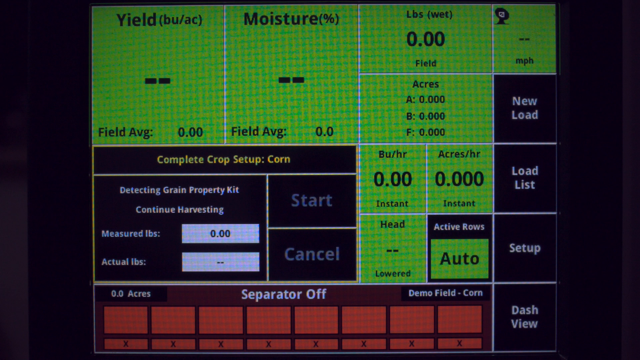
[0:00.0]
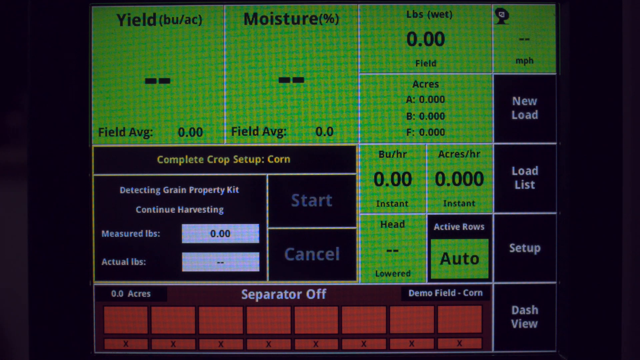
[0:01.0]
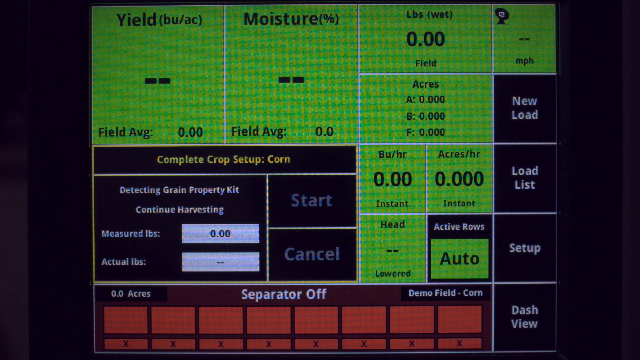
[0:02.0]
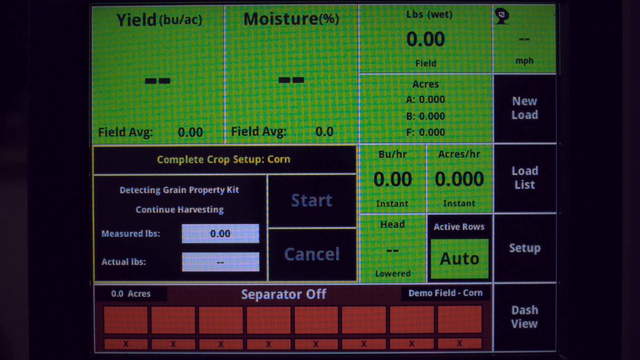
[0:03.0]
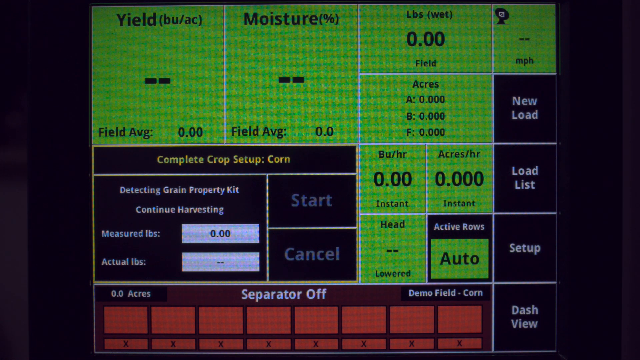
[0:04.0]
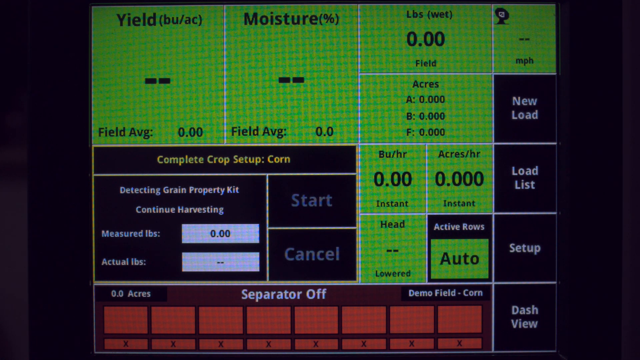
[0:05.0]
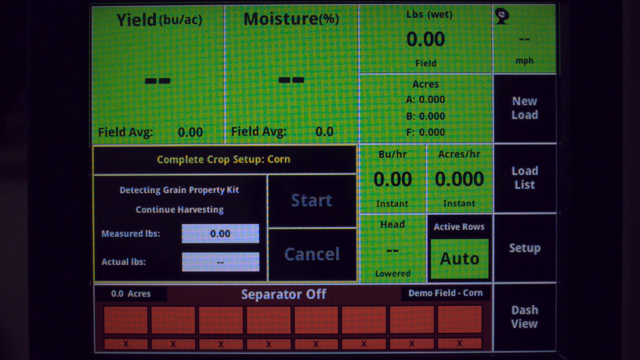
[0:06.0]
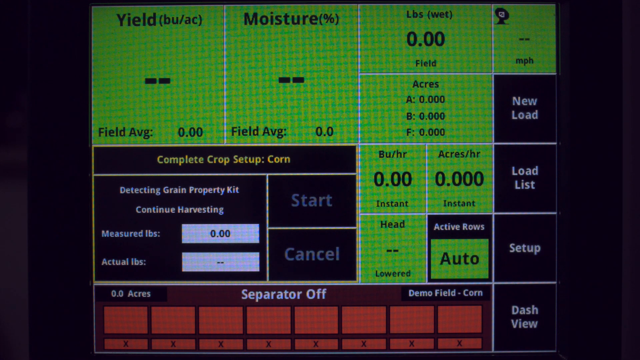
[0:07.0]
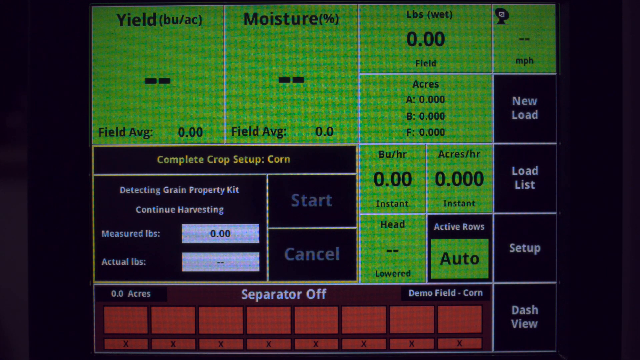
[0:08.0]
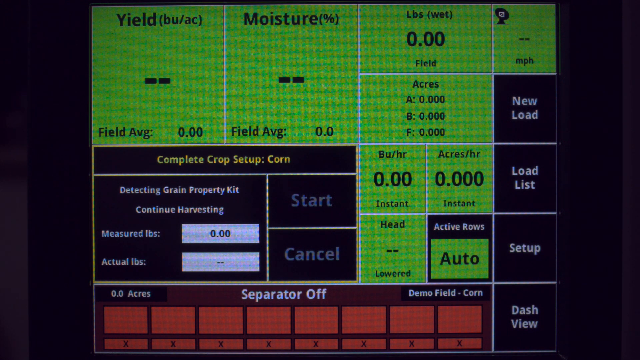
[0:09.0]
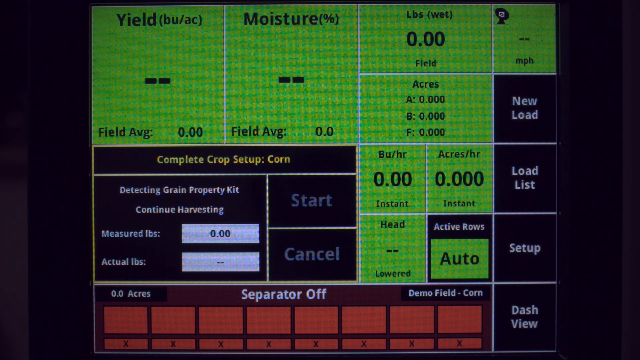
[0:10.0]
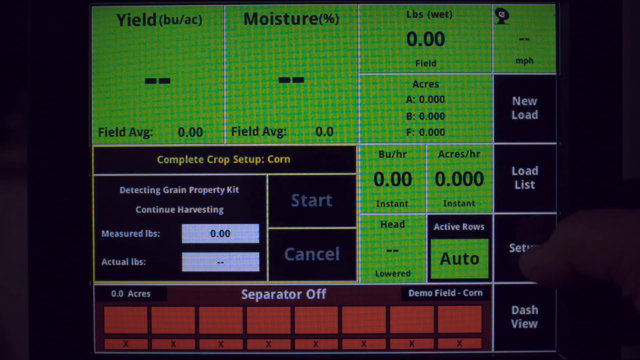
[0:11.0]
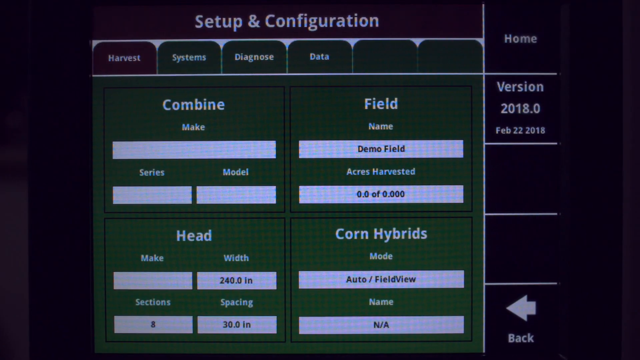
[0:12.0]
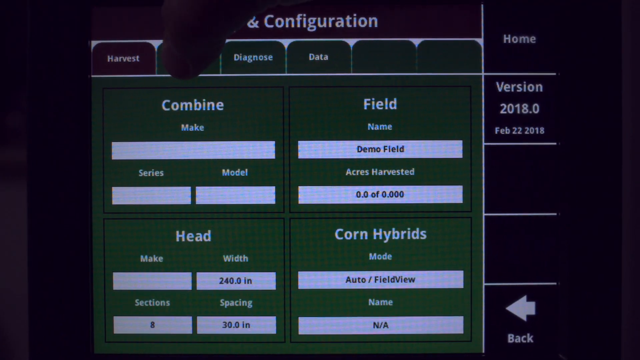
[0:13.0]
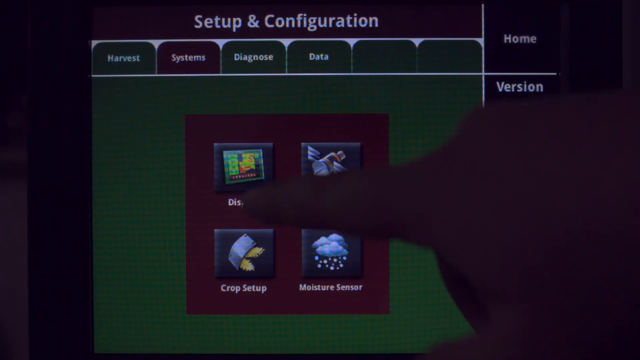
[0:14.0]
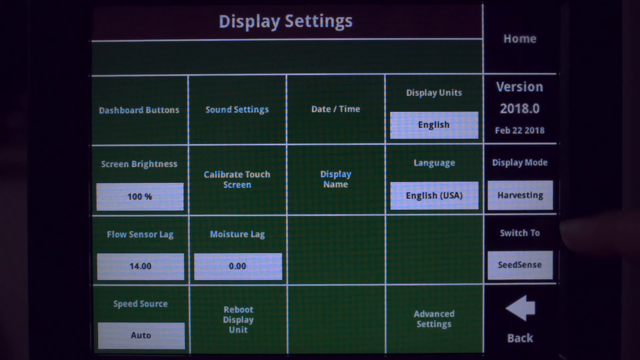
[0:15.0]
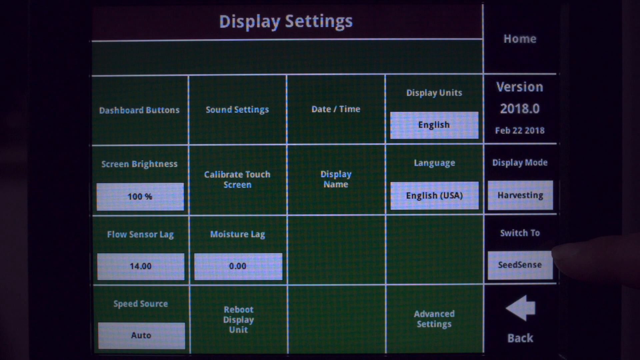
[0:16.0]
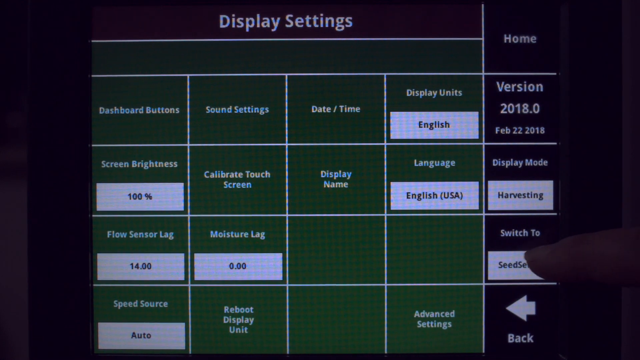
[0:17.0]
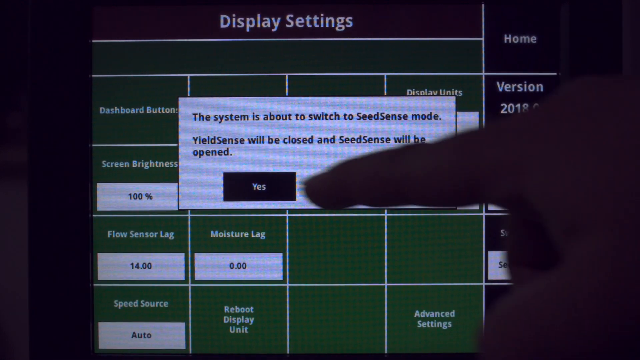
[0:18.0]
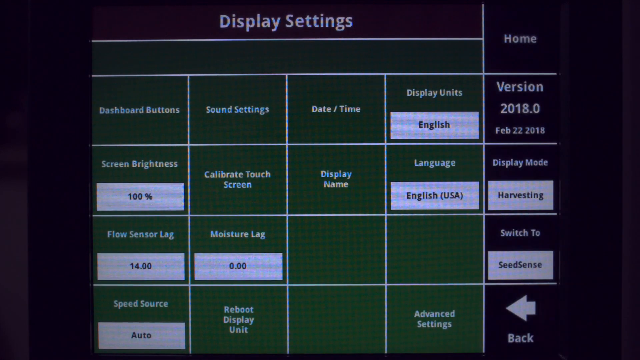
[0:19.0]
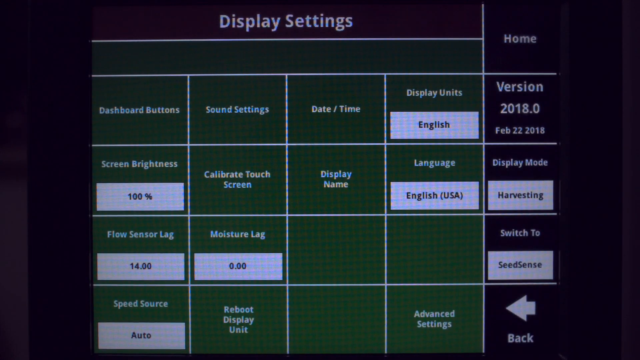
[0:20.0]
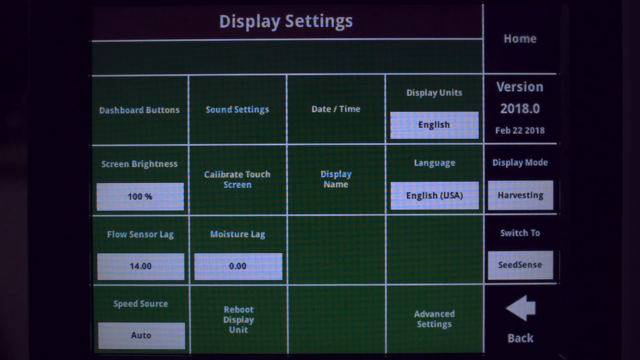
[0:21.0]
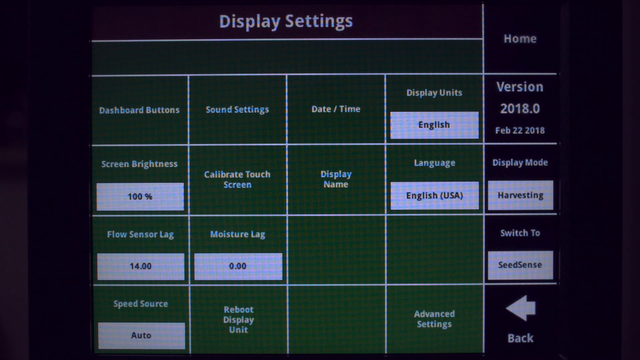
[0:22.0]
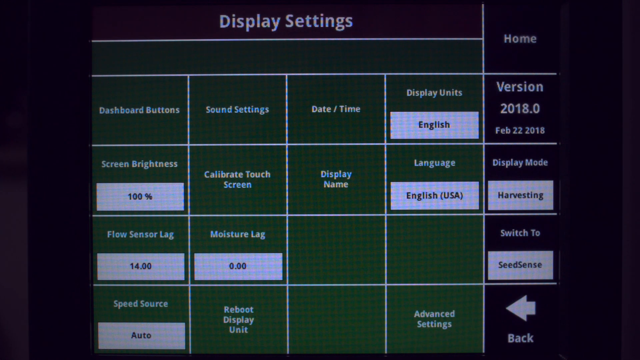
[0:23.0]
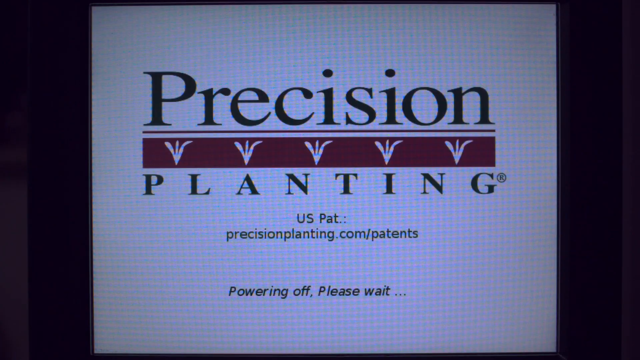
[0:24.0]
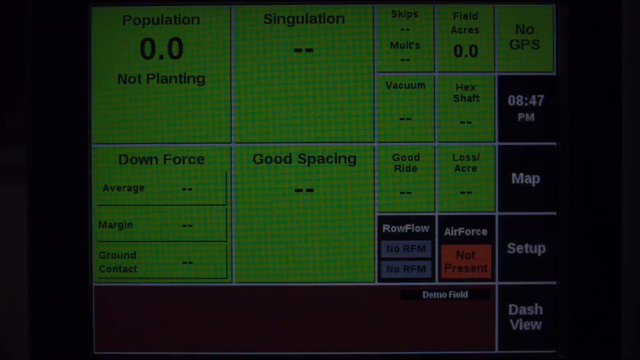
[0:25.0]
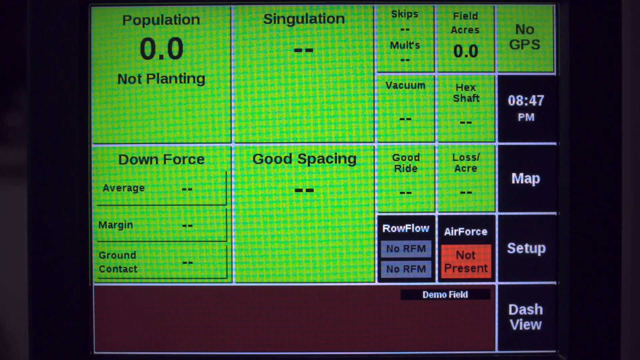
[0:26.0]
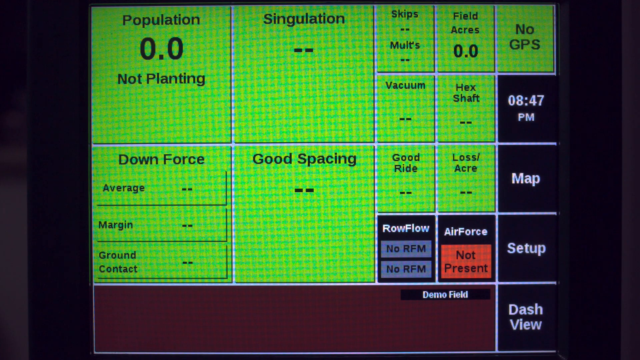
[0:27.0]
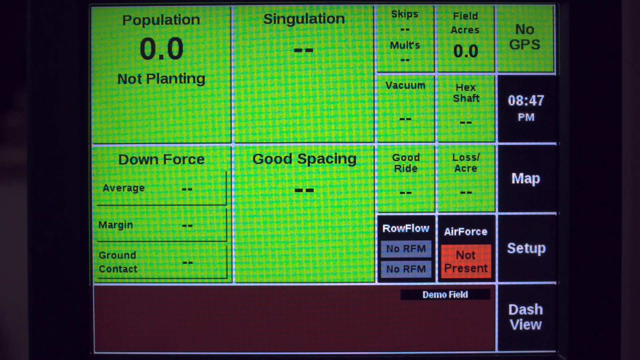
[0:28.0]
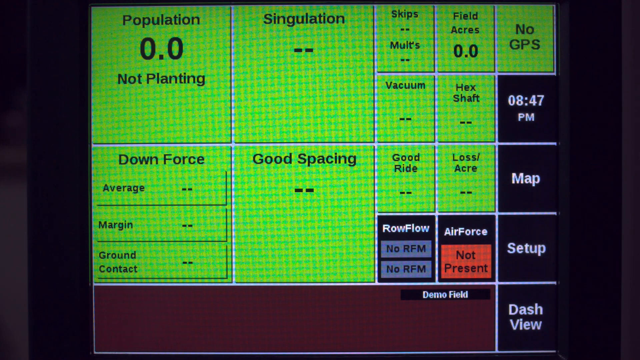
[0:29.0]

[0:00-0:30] A page is open on a computer or tablet, with areas made up of yellow boxes or rectangles, black boxes or rectangles, and some buttons that can be clicked. Someone's hand and finger move across the screen, clicking on different locations. The word "precision" appears. Words on the page include "yield" and "moisture", along with "complete crop setup" and "corn". There is also "setup and configuration" and "display settings". A box pops up that says "the system is about to switch to seed sense mode. Yield sense will be closed and seed sense will be opened." with options for yes or no, and the person clicks yes. As they do, "precision planting" appears in the background.